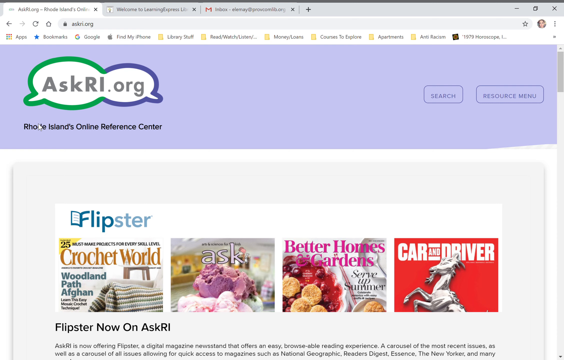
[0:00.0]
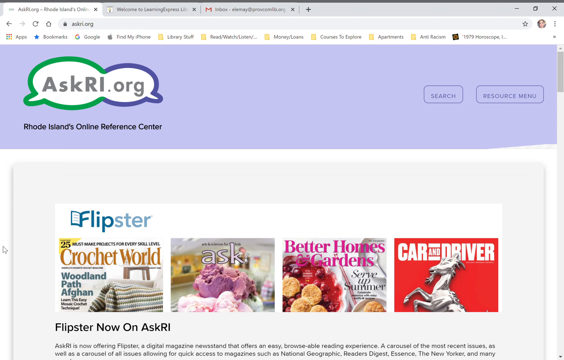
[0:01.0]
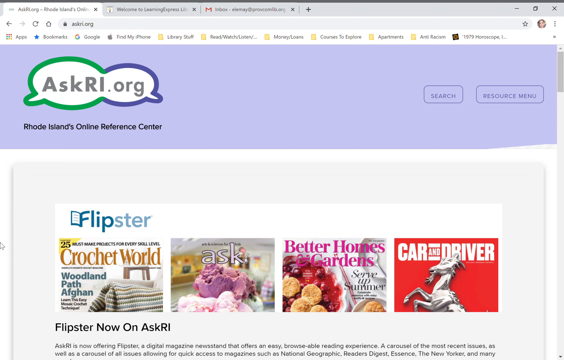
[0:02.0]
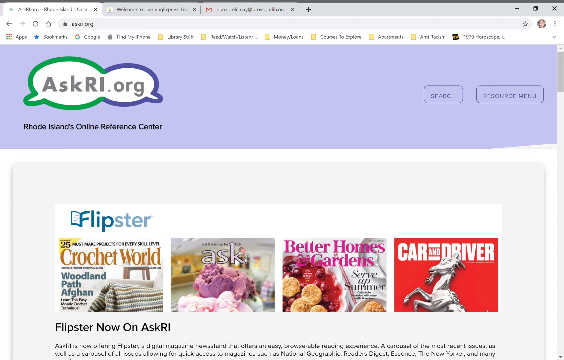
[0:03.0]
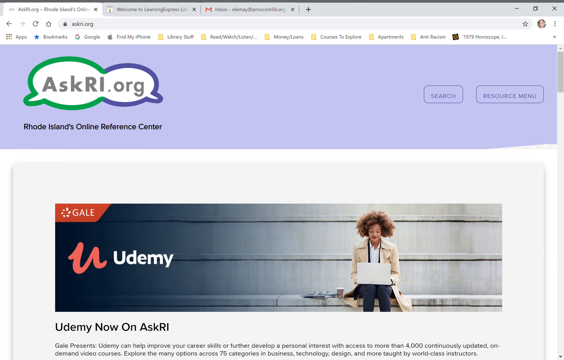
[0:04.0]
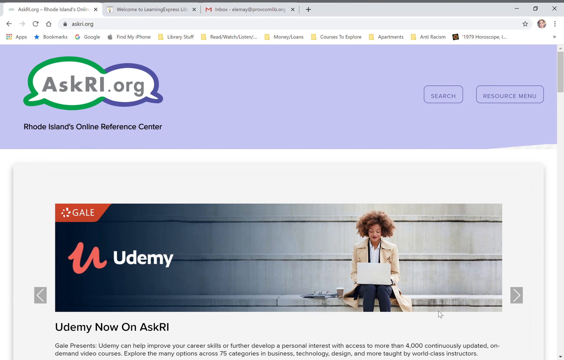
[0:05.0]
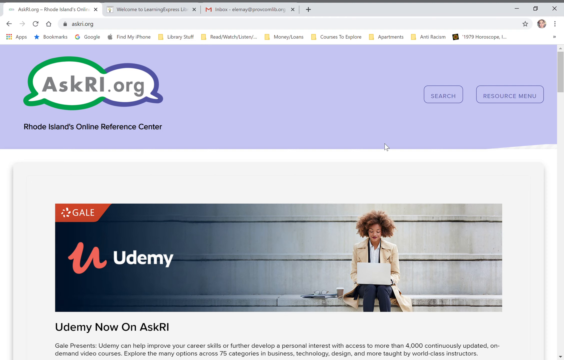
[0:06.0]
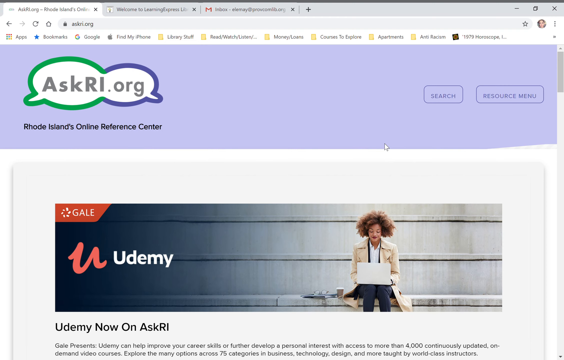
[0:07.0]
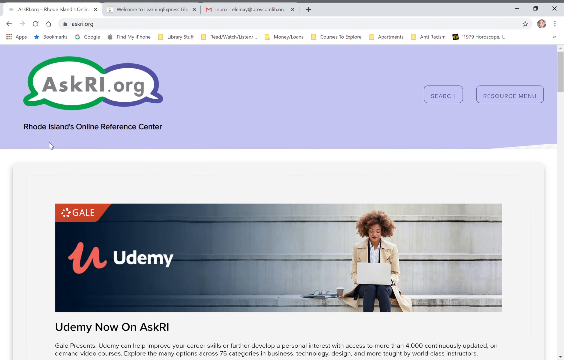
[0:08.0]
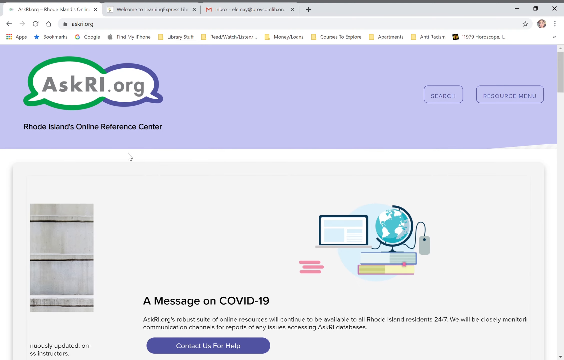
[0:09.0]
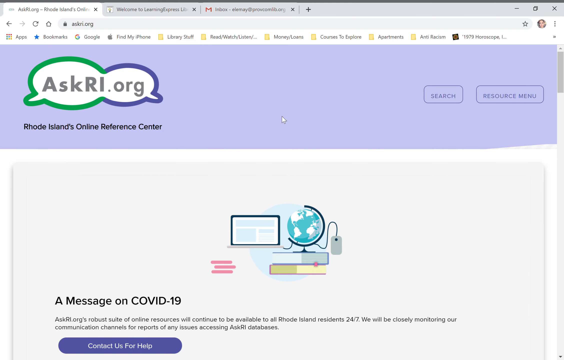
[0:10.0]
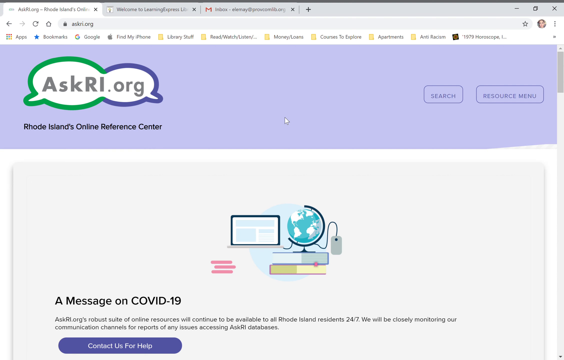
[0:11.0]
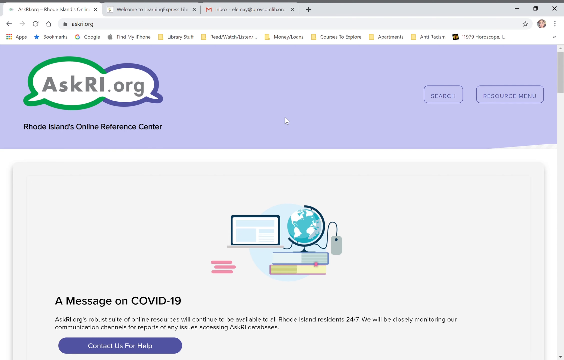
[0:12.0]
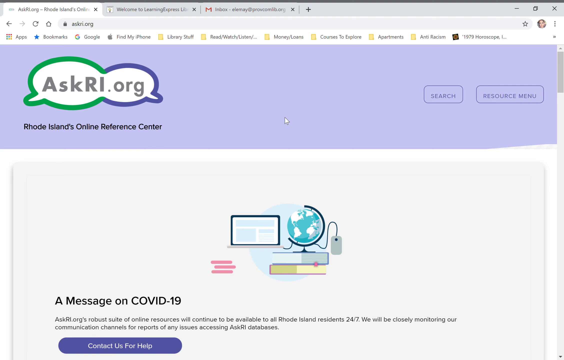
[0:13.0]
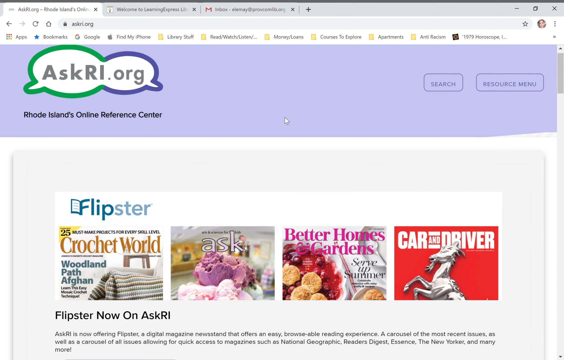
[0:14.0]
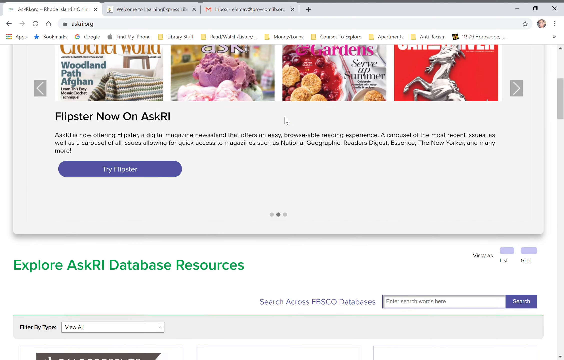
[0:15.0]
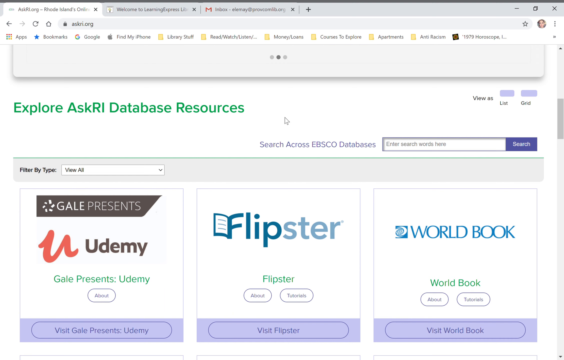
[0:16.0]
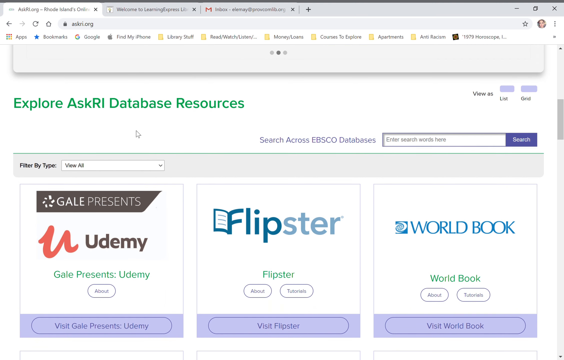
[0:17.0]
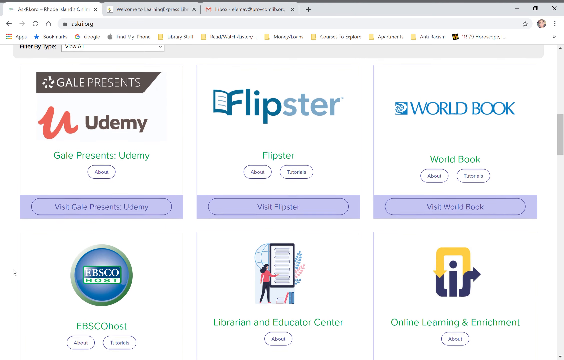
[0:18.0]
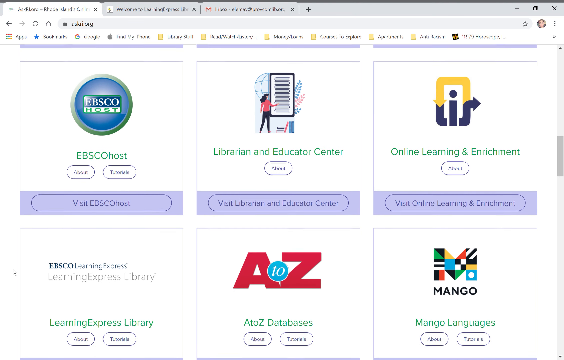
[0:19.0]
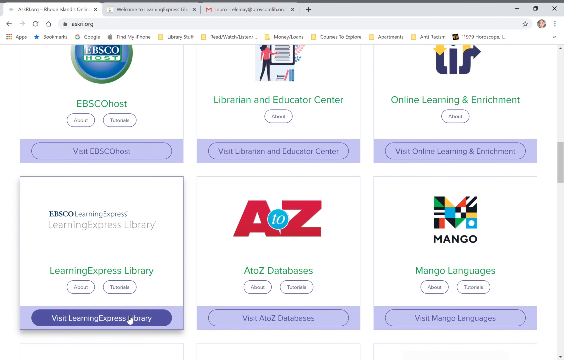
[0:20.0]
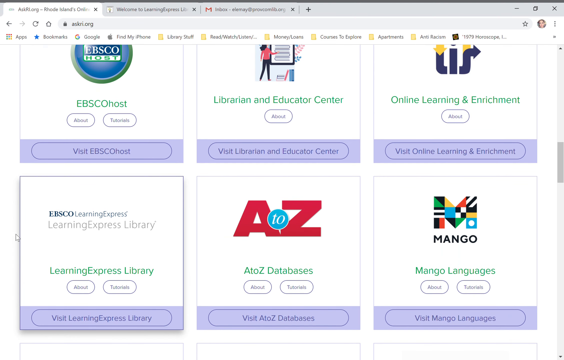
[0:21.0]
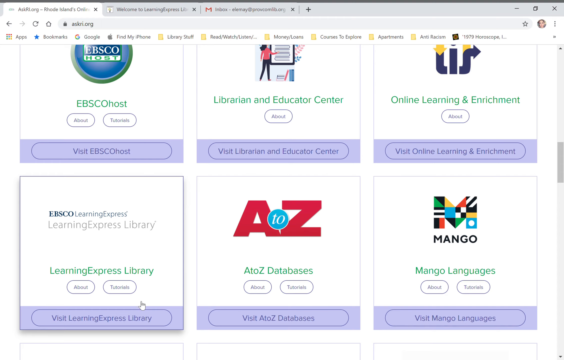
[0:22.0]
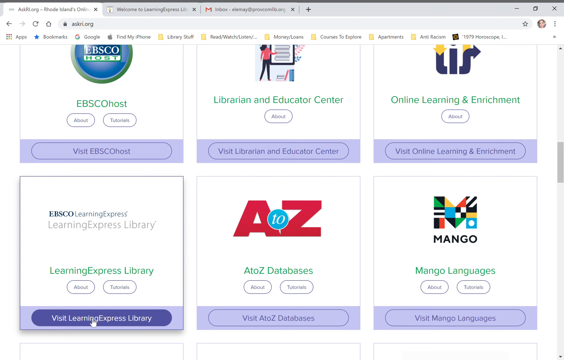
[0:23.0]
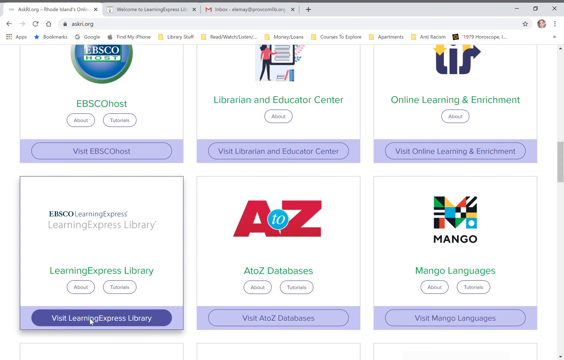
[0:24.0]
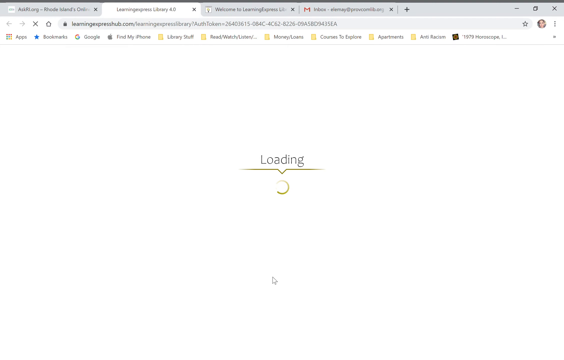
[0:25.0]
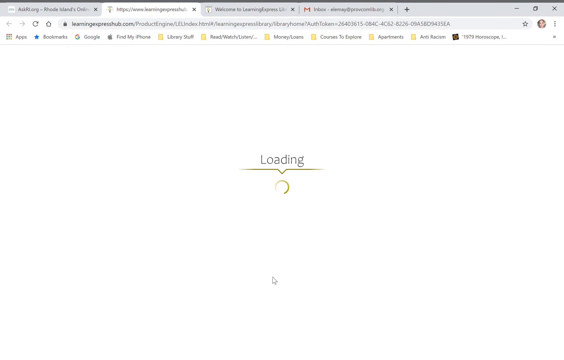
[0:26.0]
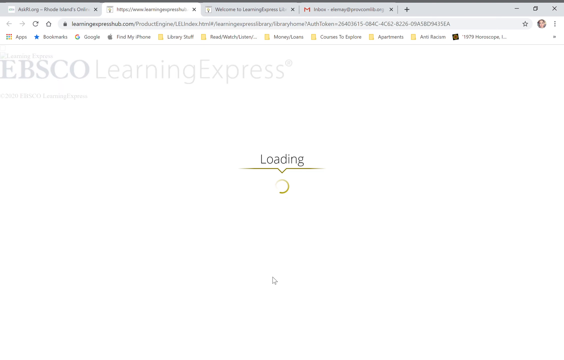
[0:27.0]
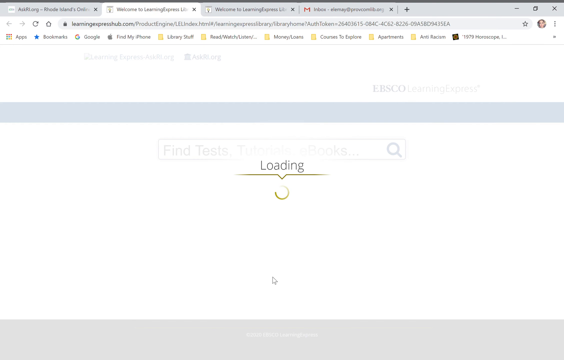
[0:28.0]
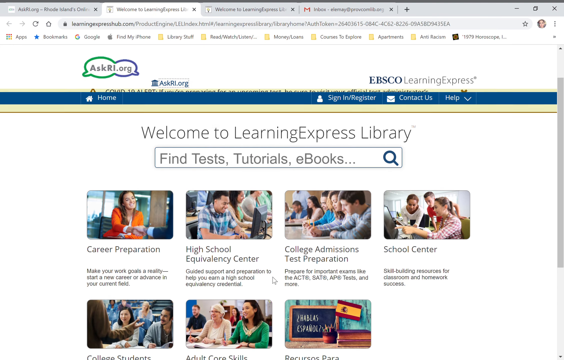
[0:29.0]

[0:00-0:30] The video opens on the askri.org homepage in a Chrome browser with three tabs open: askri.org, a tab beginning with "welcome to", and a Gmail inbox. There are about seven or eight bookmarks. The homepage shows Flipster with four magazines on the cover: Crochet World, Ask, Better Homes and Gardens, and Car and Driver. The page scrolls to the right to Udemy, then right again to a message on COVID-19 with contact help, and then back to the original page with the magazines. Scrolling down reveals an "explore the askri database" section with about nine different options, each with three sub-options. EBSCO Learning Express is clicked, then Learning Express Library, then the option to view the Express Library. A loading page appears with the word "loading" in the middle, a gold/yellow line underneath, and a loading circle below that.